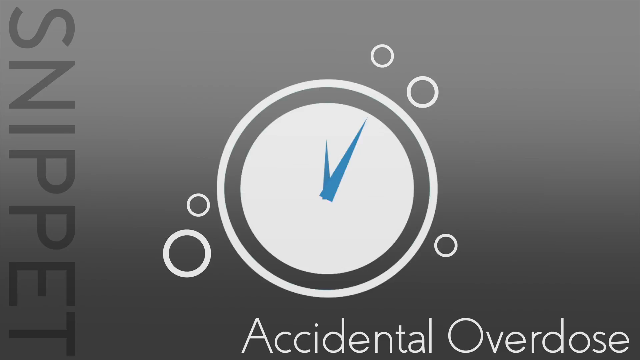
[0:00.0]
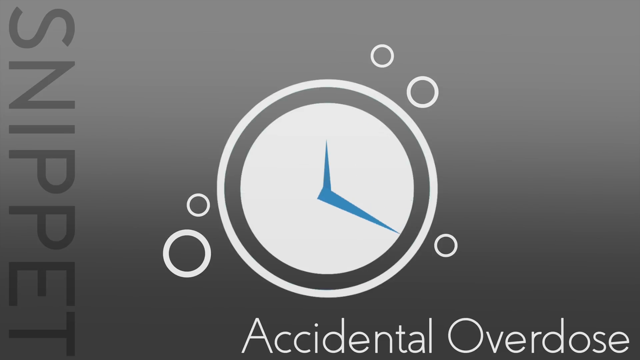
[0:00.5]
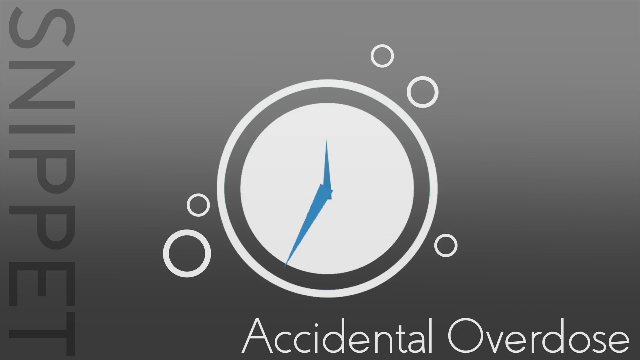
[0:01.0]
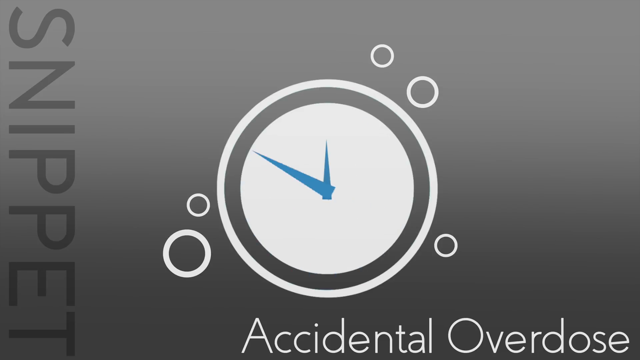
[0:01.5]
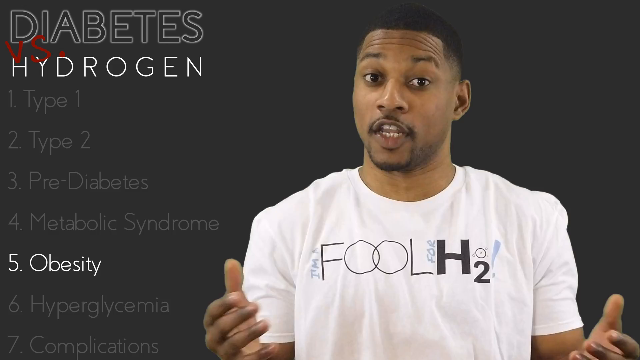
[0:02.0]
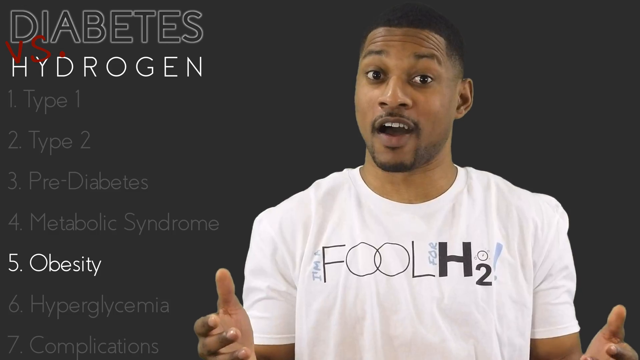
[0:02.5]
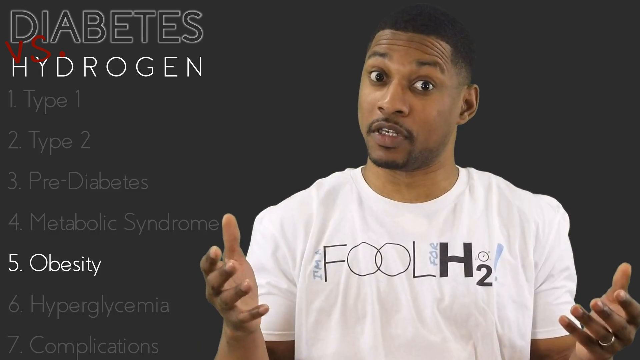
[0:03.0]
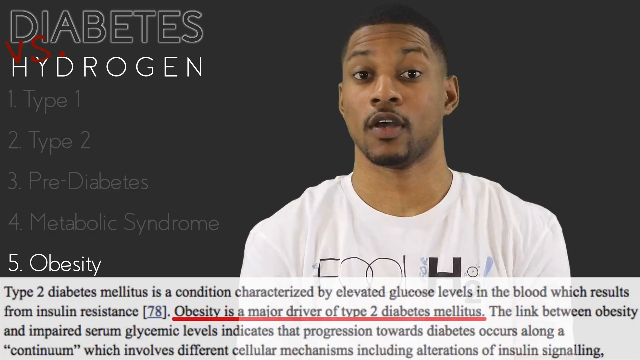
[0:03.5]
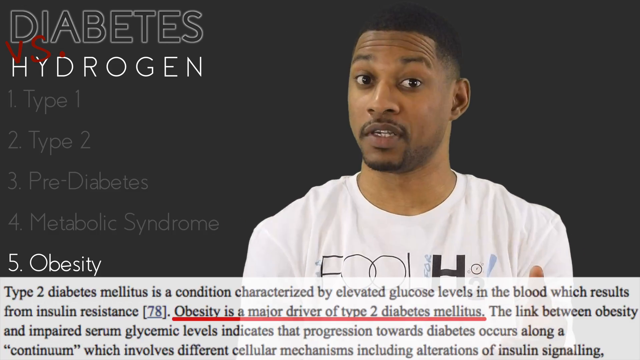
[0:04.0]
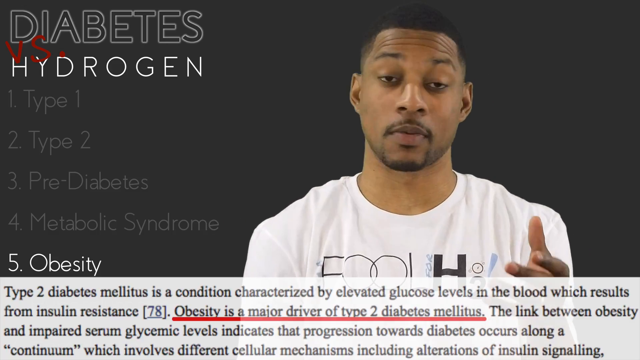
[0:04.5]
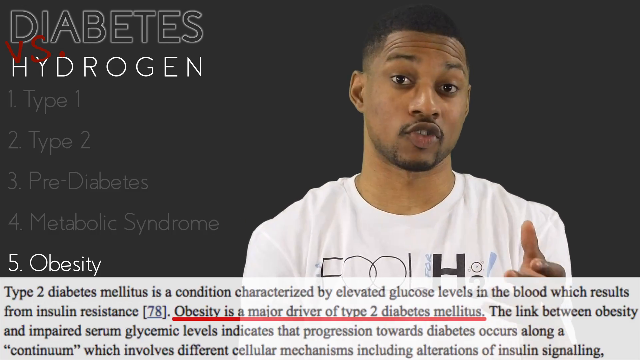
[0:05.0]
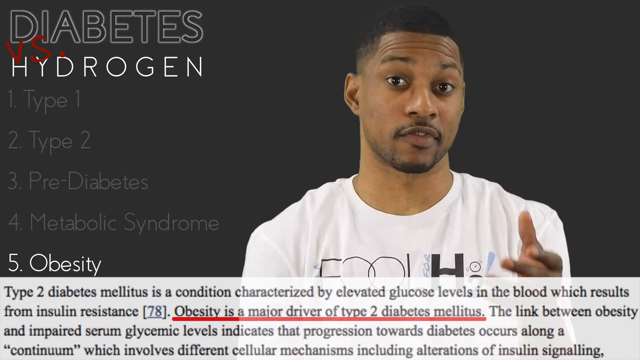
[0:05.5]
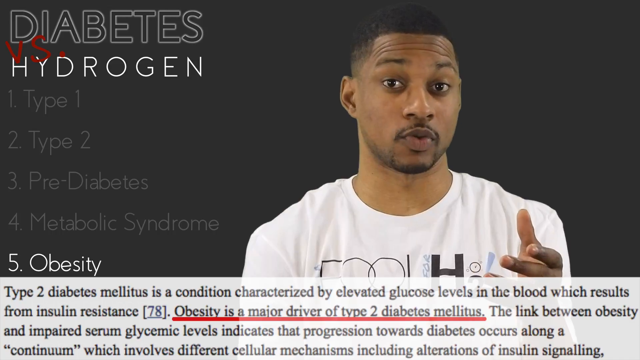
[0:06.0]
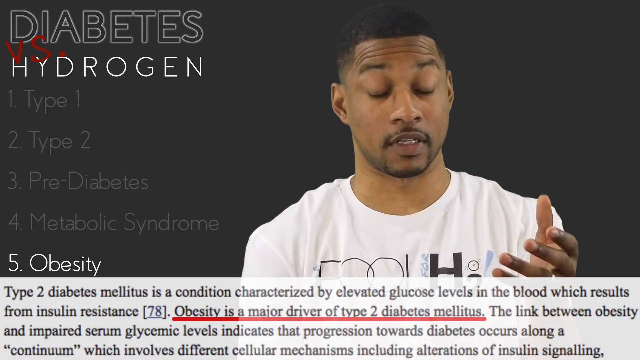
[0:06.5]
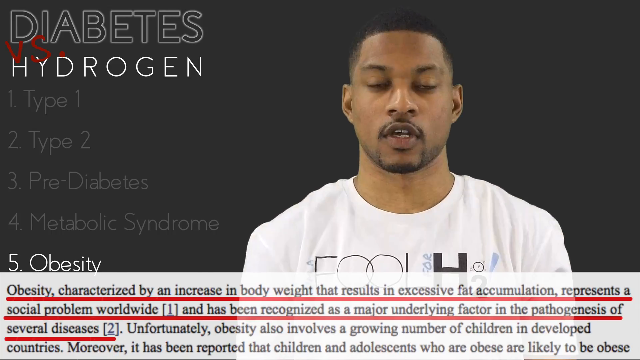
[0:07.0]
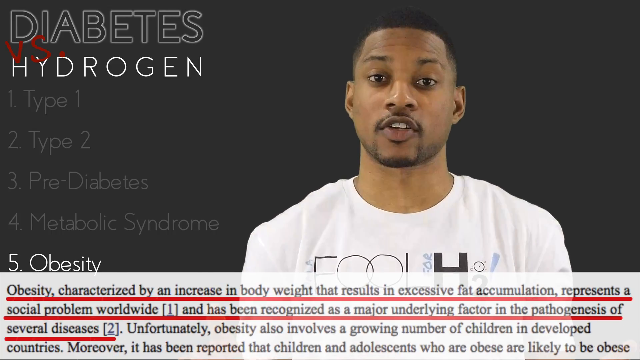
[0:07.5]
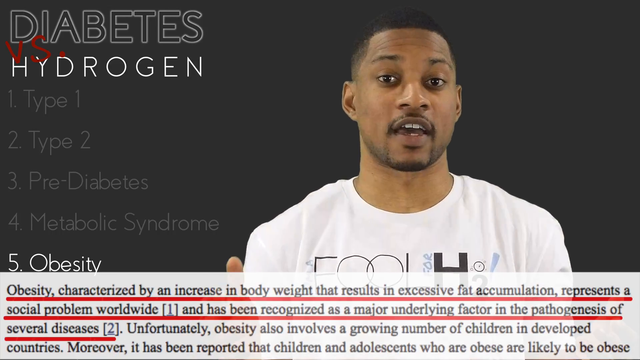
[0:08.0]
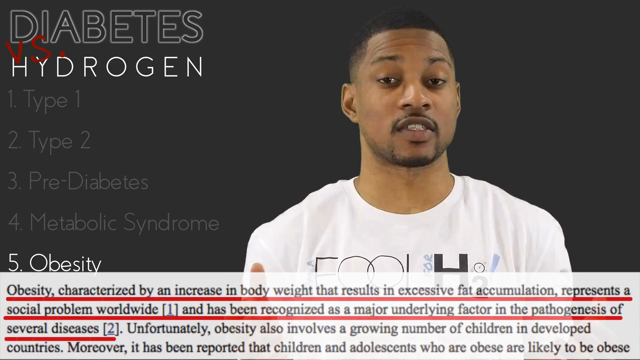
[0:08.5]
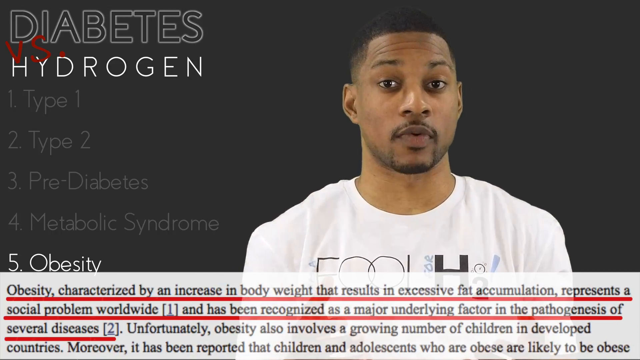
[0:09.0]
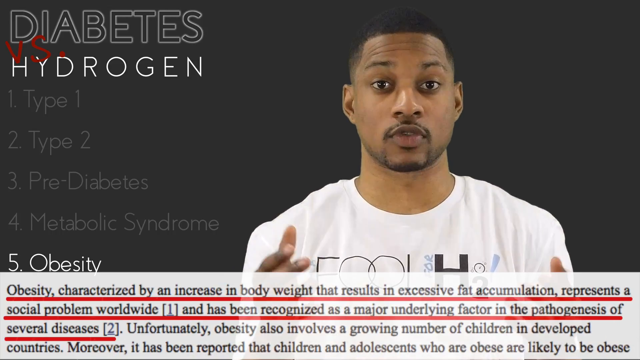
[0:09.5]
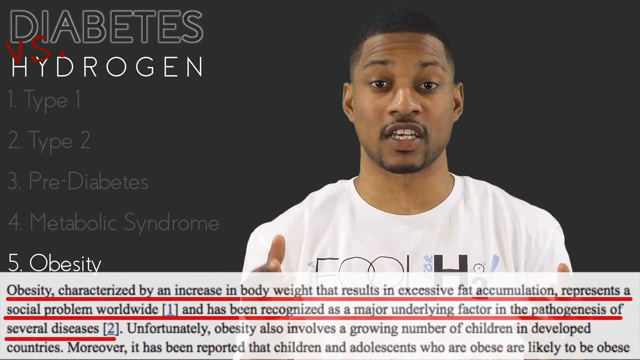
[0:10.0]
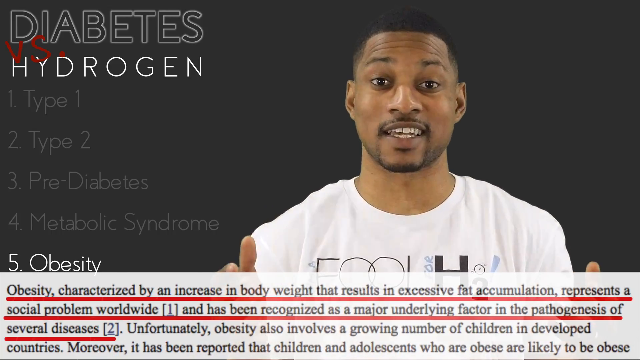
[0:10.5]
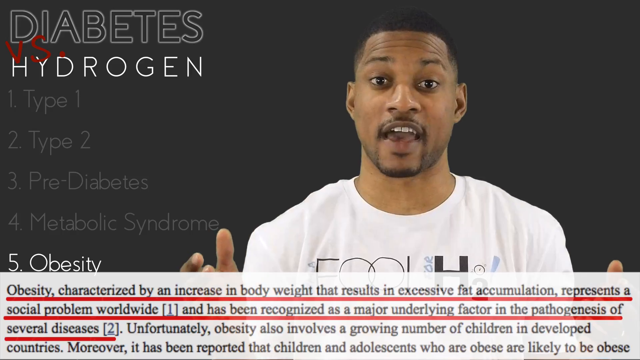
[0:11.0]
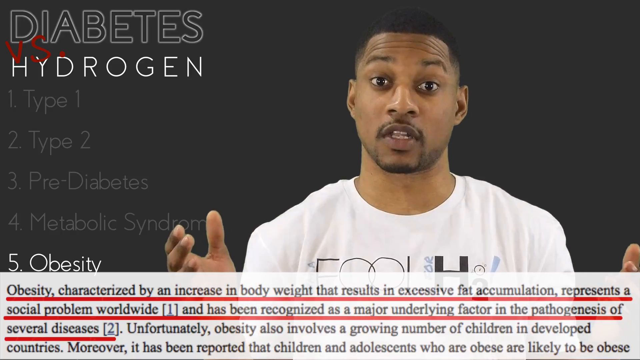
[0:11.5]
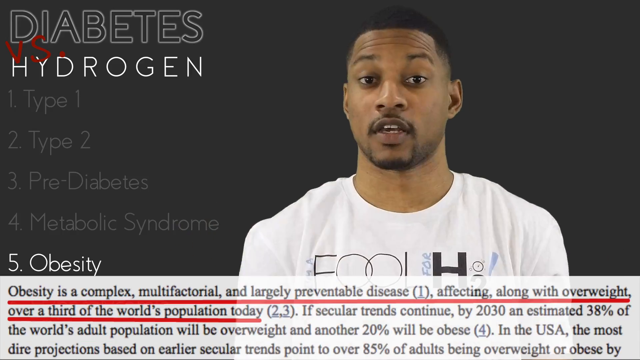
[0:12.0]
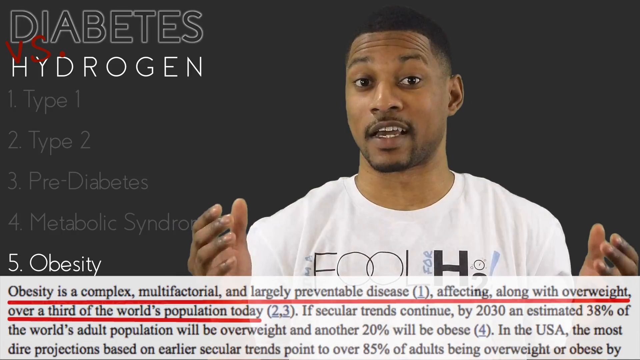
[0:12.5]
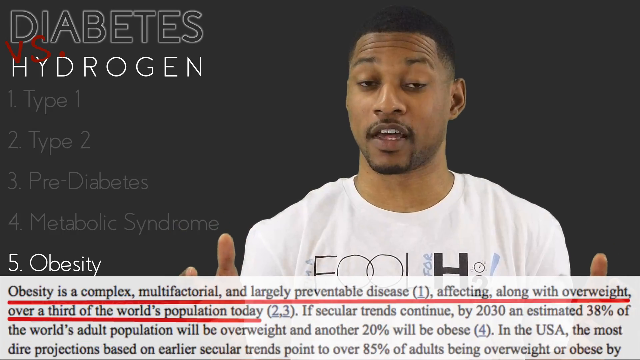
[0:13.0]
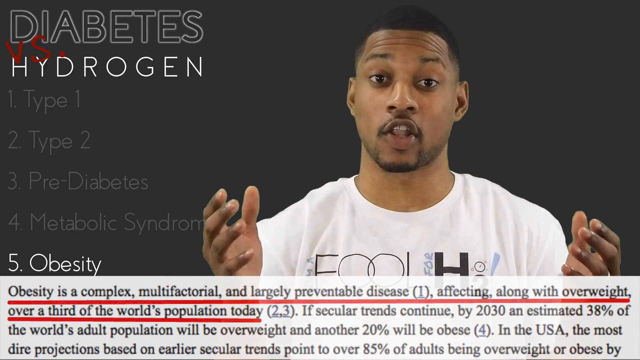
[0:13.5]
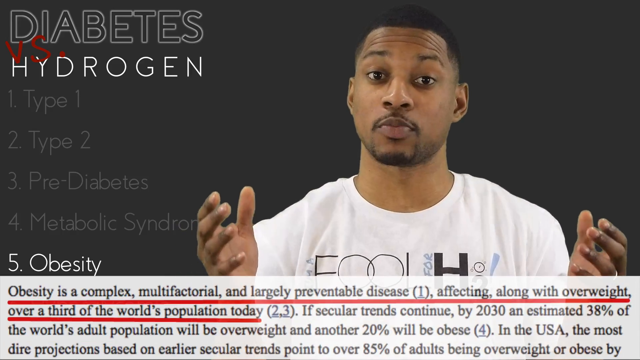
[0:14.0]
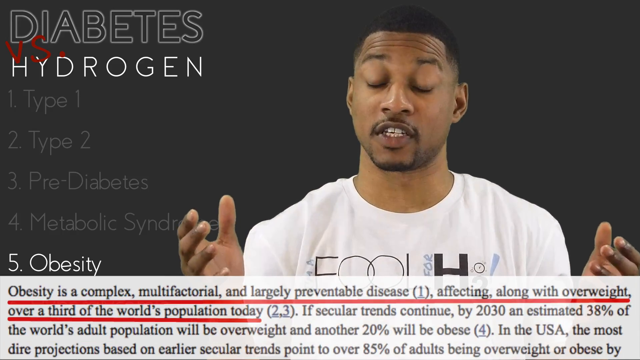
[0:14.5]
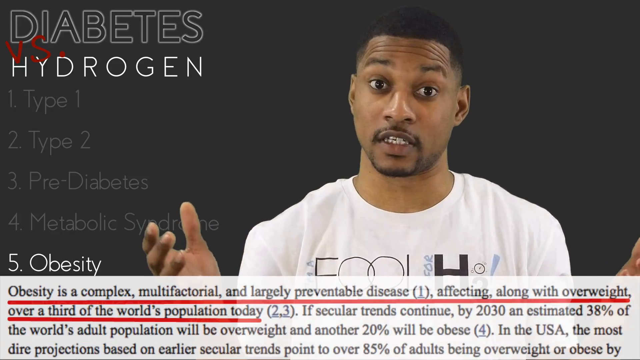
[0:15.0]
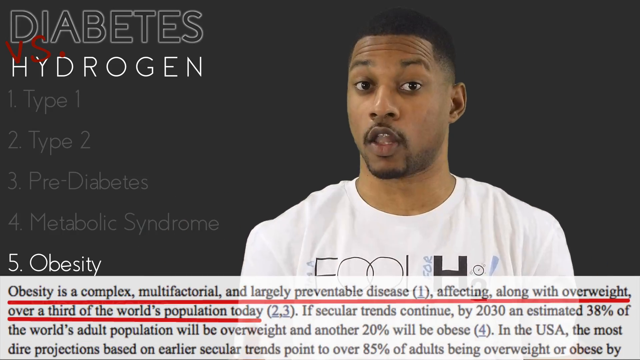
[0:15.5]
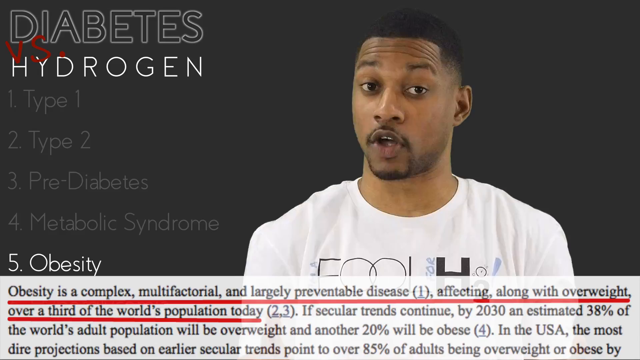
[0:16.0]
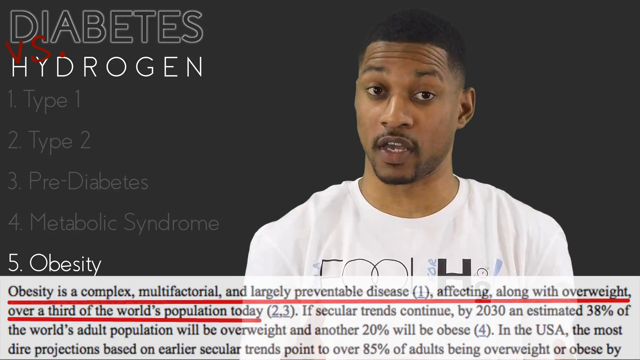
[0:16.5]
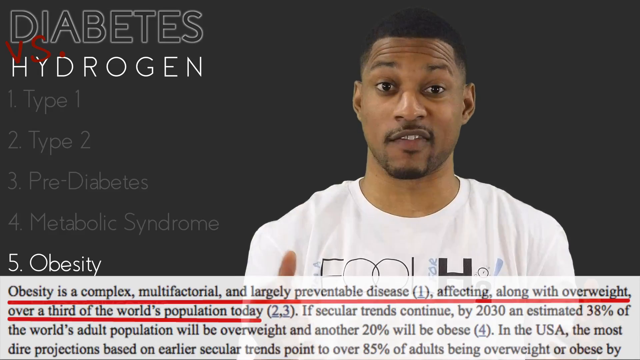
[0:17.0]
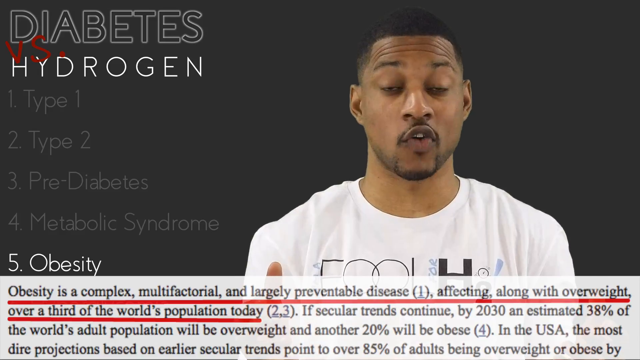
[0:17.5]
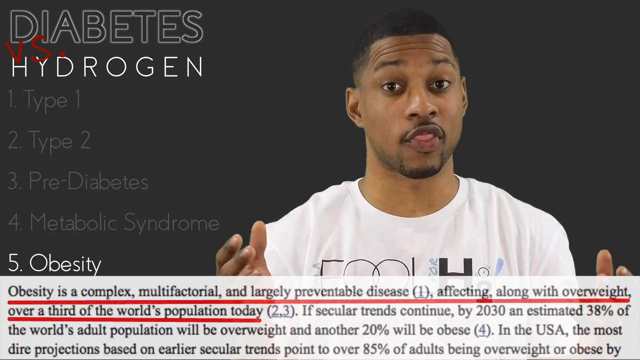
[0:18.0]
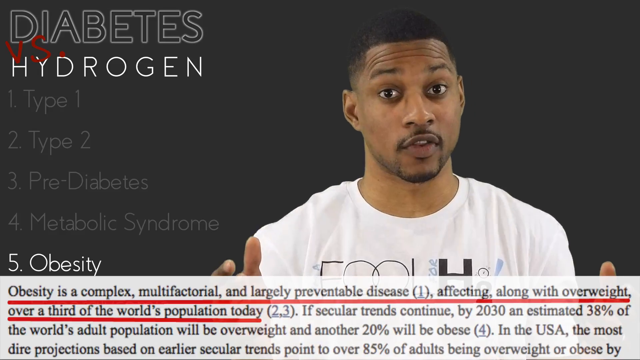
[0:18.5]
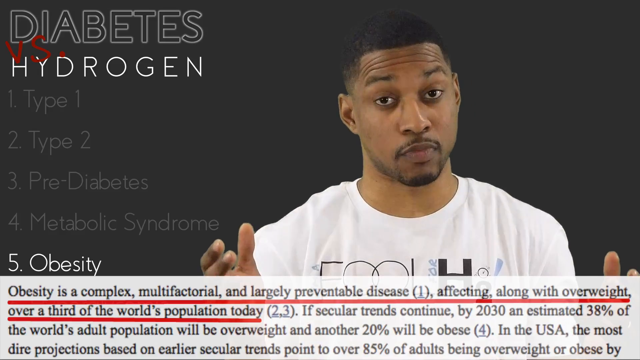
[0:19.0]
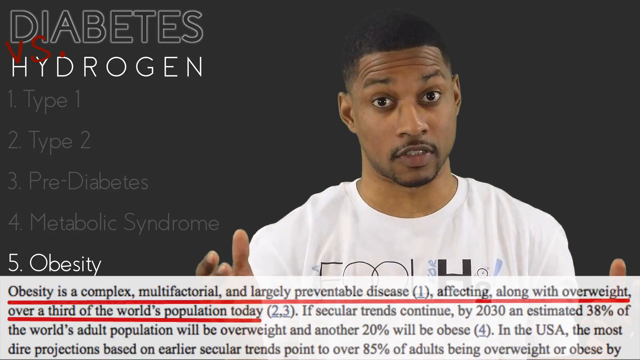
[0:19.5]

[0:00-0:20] The video deals with type 1 and type 2 diabetes, prediabetes, the metabolic system and obesity. A watch shows the time. Type 2 diabetes is presented as a condition characterized by elevated glucose levels in the blood that lead to many dangerous effects in the body, and obesity is presented as a major driver of type 2 diabetes.